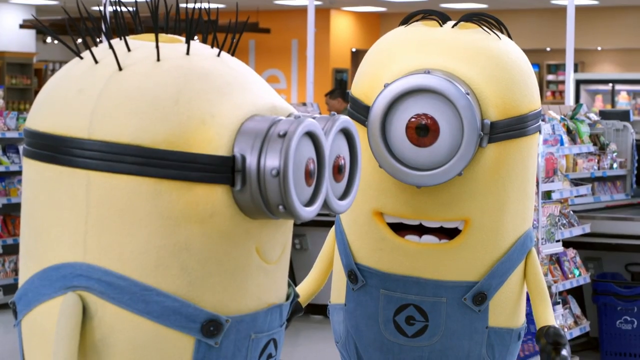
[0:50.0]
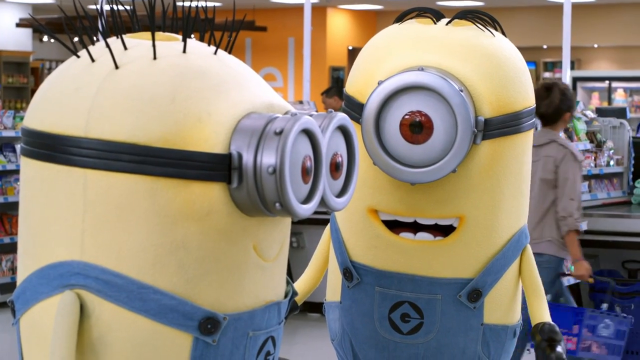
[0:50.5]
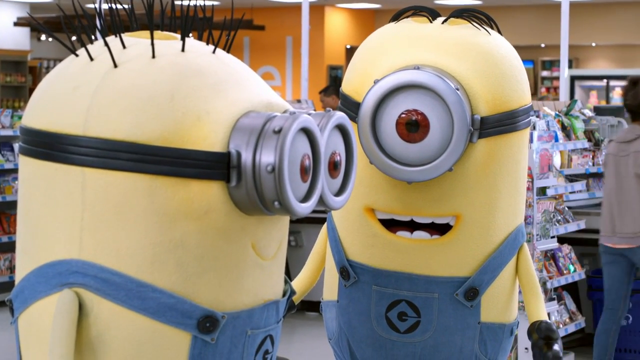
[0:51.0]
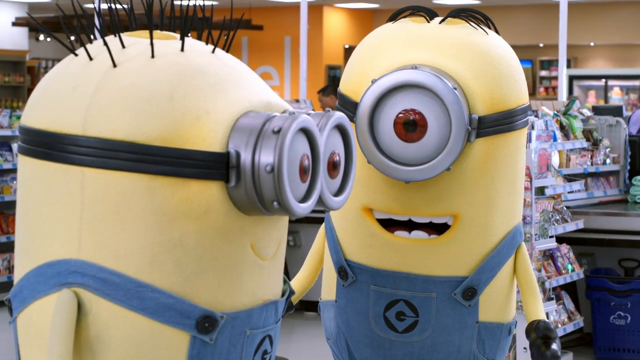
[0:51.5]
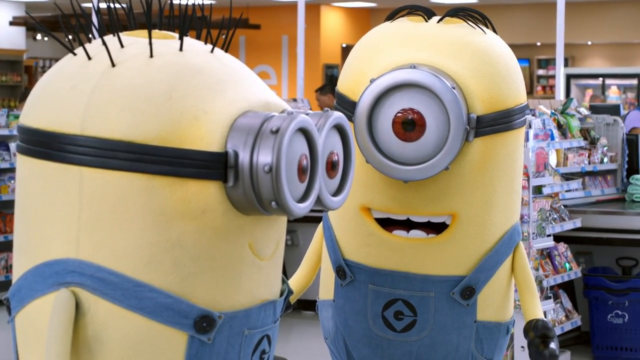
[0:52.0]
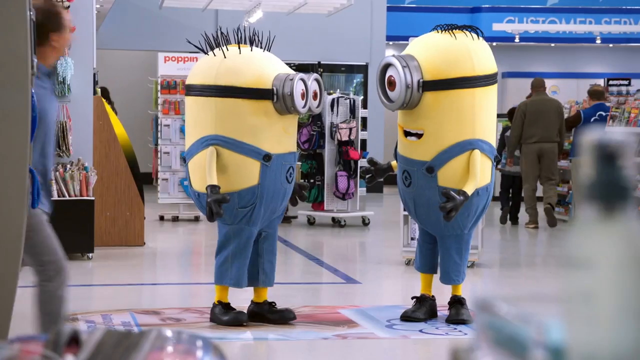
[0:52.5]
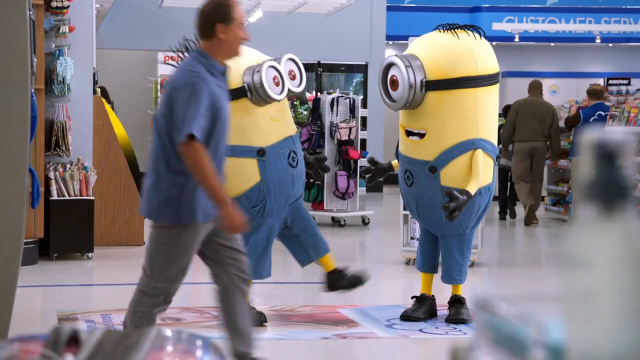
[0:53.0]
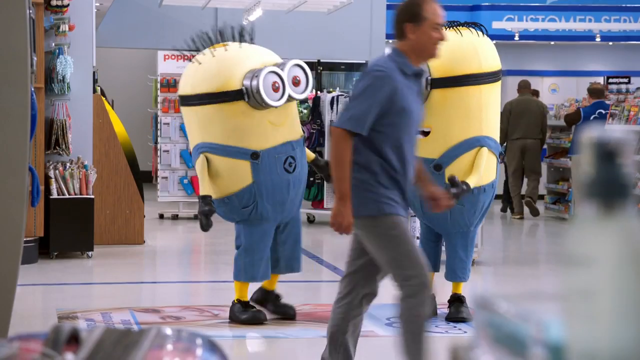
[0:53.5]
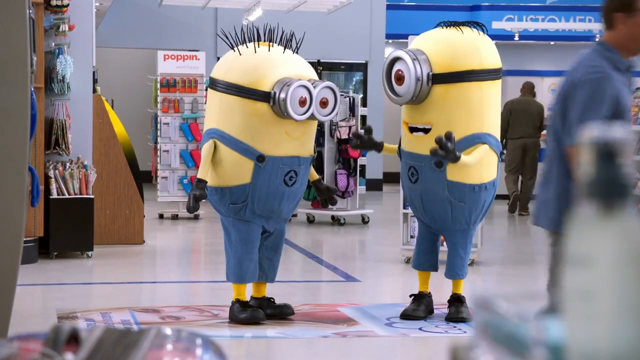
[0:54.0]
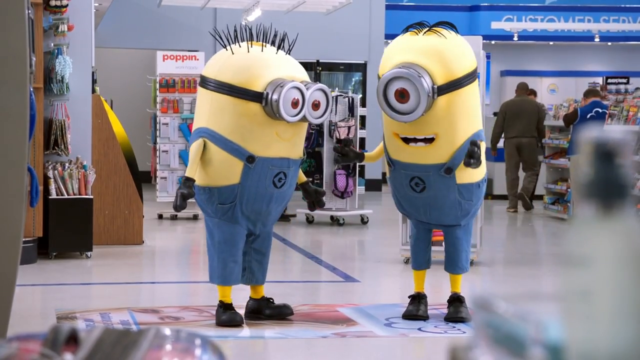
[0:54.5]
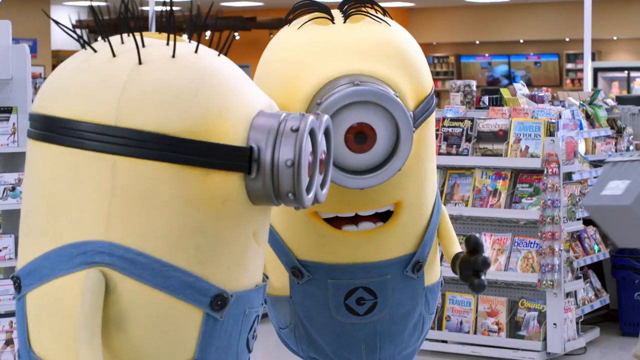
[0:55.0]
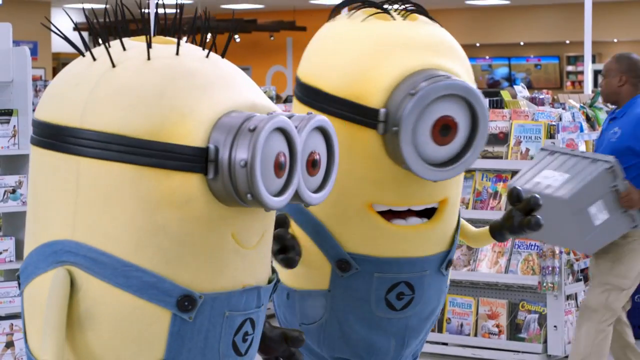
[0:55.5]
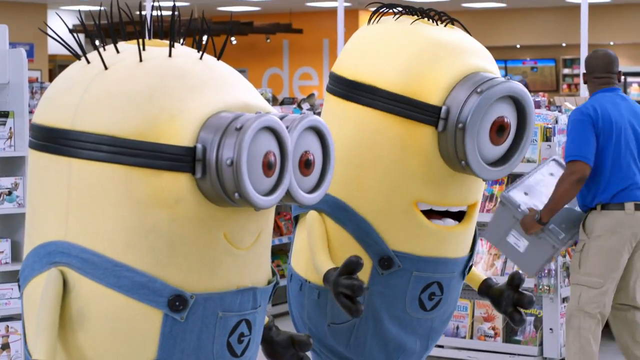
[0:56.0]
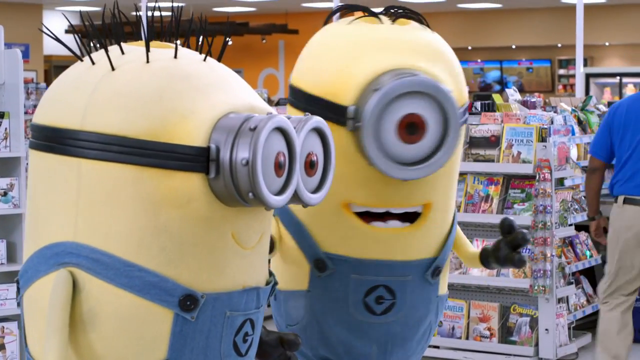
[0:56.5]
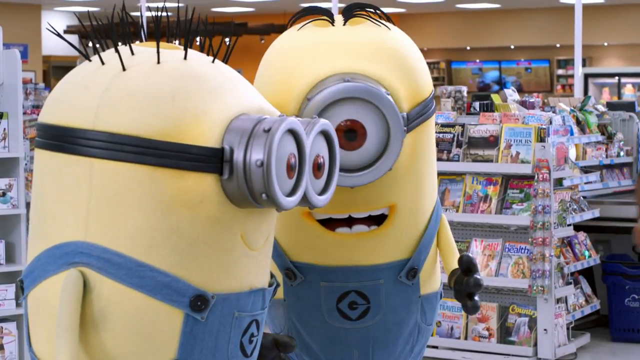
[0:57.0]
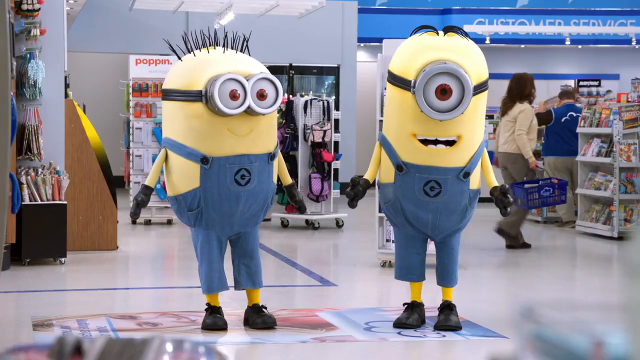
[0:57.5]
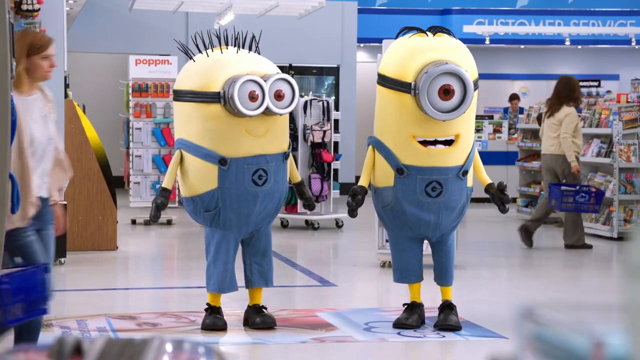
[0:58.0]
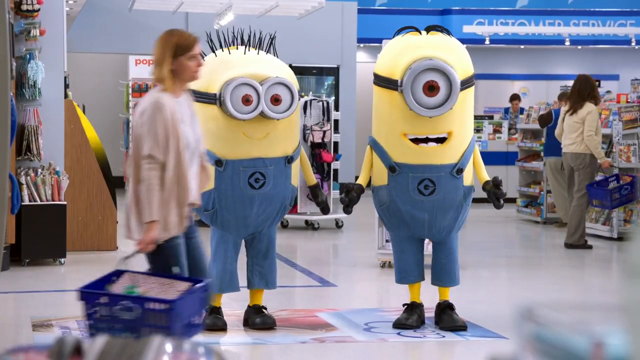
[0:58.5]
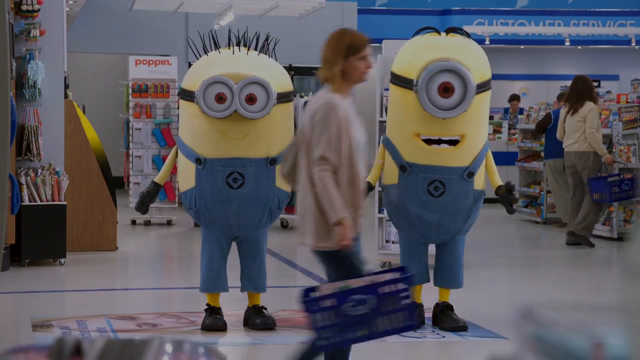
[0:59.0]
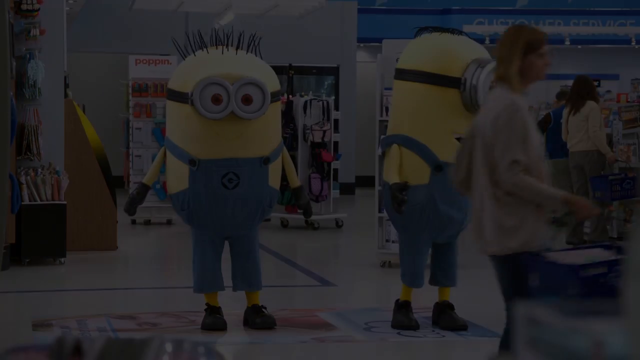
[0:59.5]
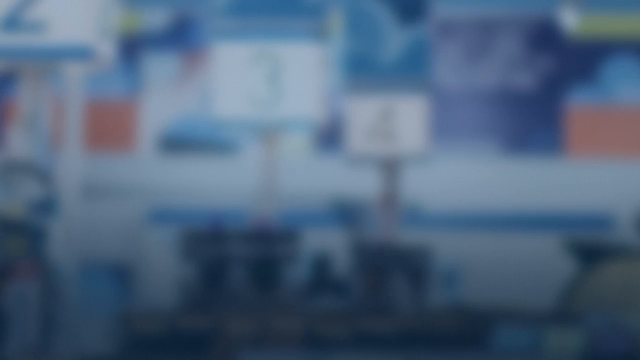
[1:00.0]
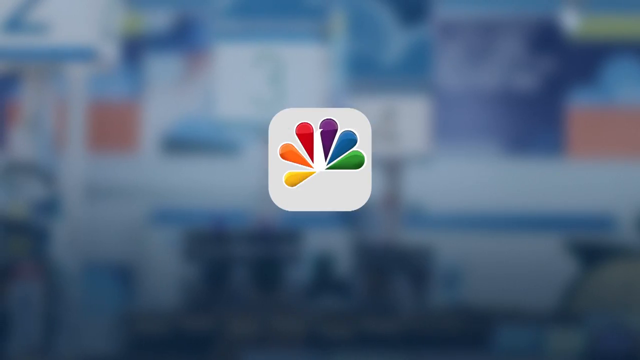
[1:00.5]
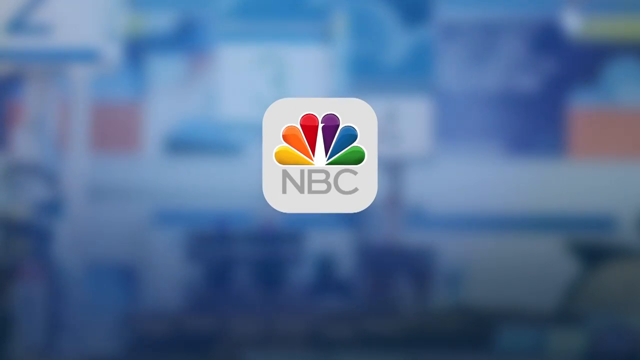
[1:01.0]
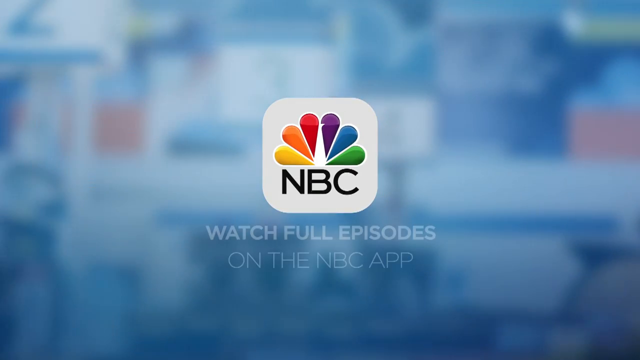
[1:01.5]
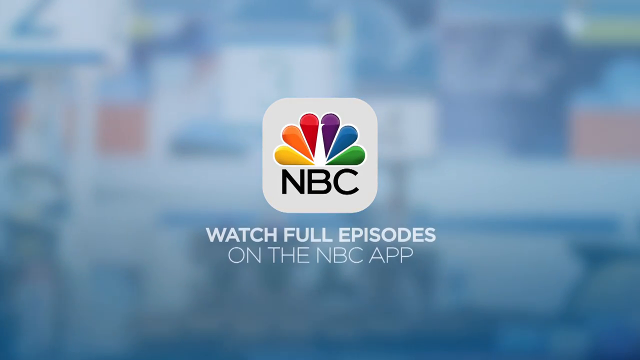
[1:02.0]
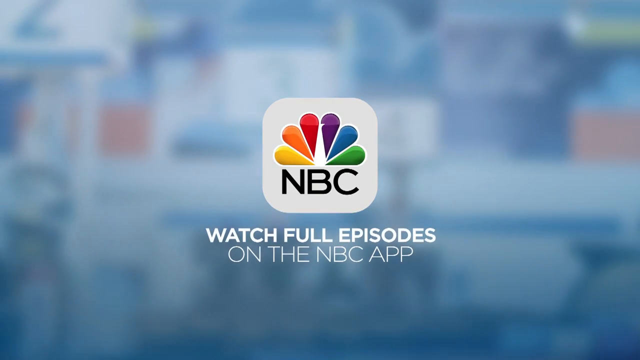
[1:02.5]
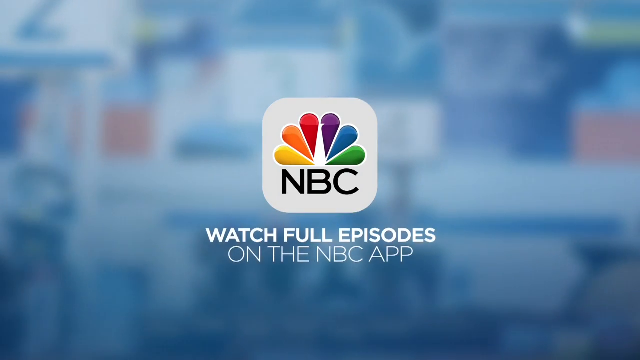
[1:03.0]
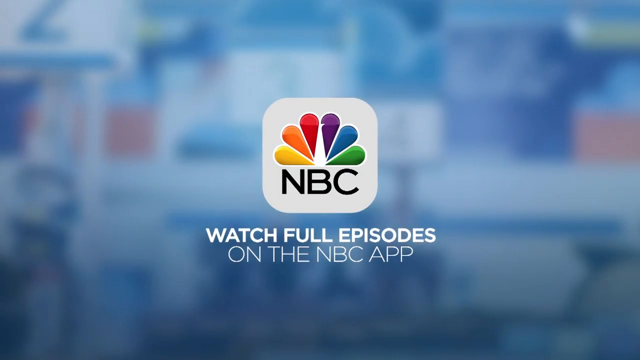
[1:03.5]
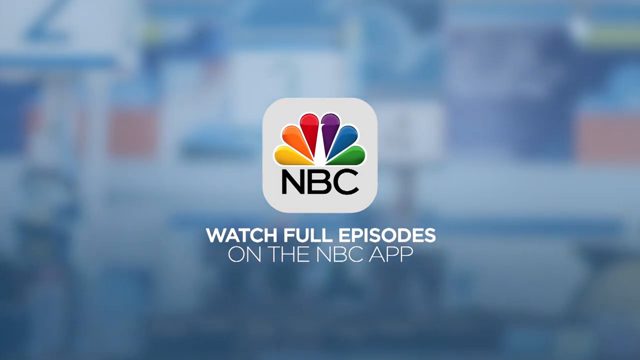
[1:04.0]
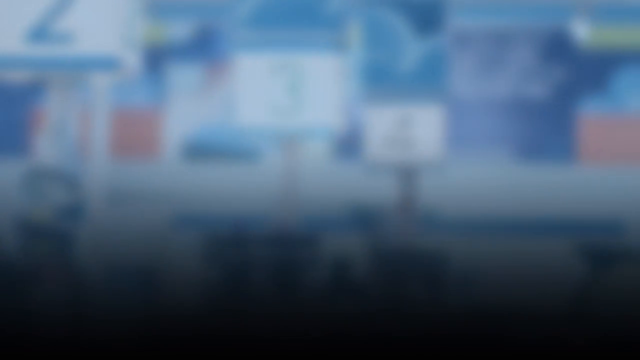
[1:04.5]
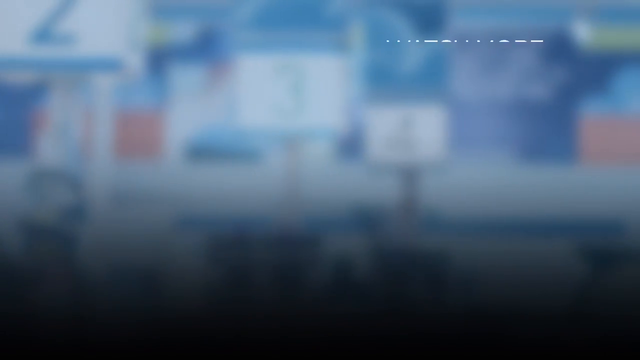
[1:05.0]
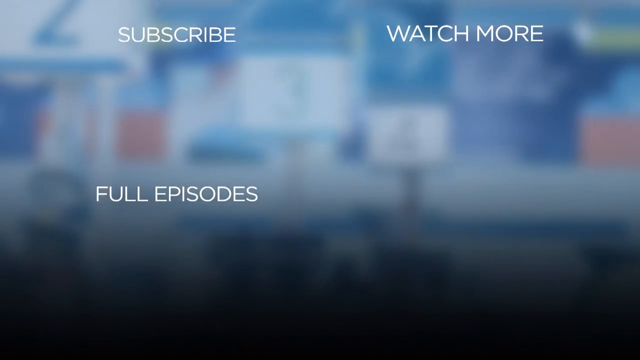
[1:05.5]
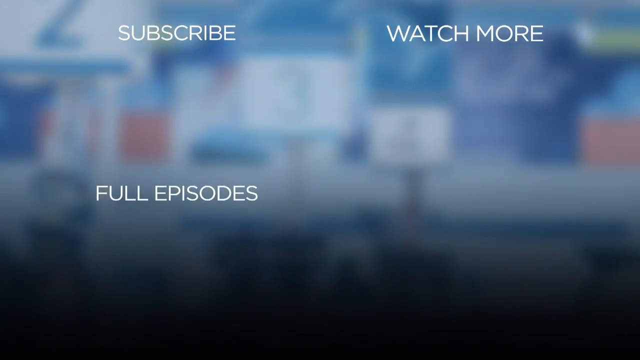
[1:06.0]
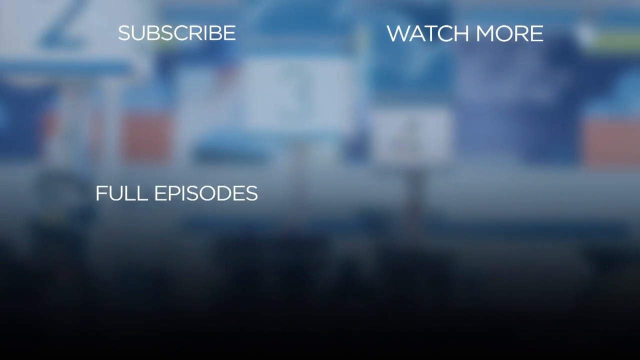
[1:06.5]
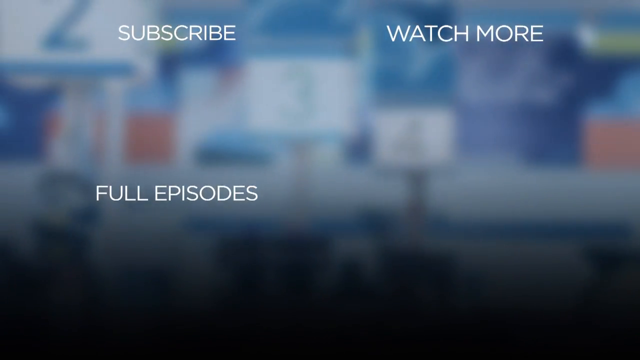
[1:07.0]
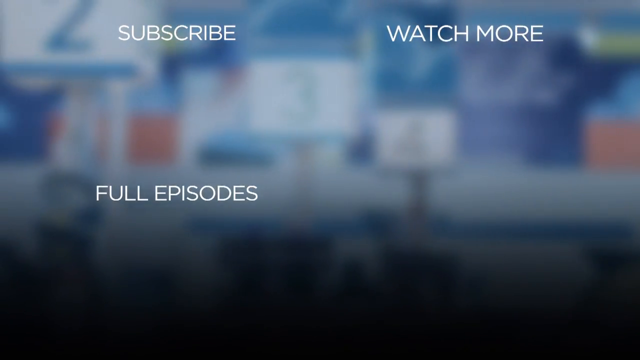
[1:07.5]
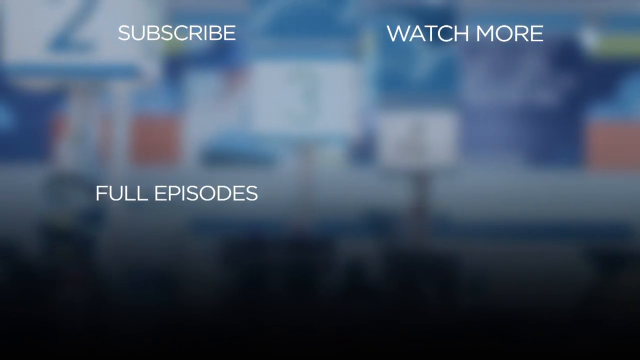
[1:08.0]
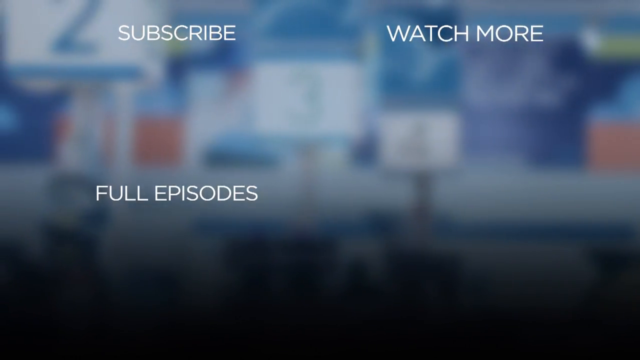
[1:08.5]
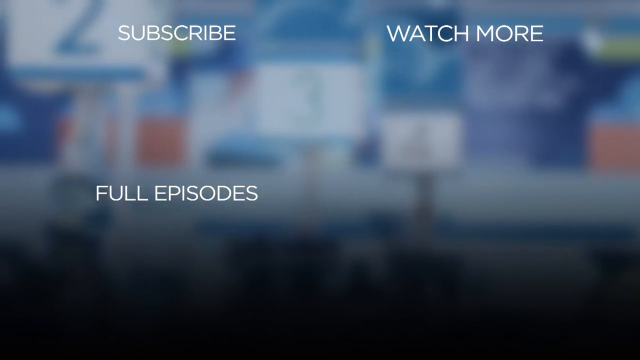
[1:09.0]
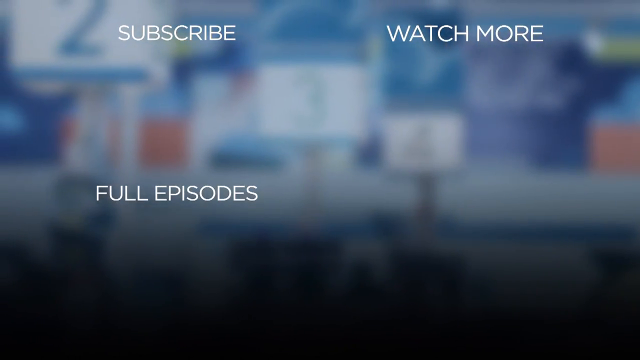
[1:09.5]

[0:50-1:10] The video starts out saying "superstore" and shows two minions standing in the middle of a superstore with customers walking around them. Then it flashes to an NBC sign reading "watch full episodes" and a Superstore sign, so it is apparently a show. Customers walk all around the store. One man who might work there wears a blue shirt and khaki pants and carries some sort of box. One customer carries a blue basket. They walk around the different aisles shopping. There are magazines, and a stand with the name "Poppins" on it is behind them. The episodes that flash up are apparently from the show Superstore.